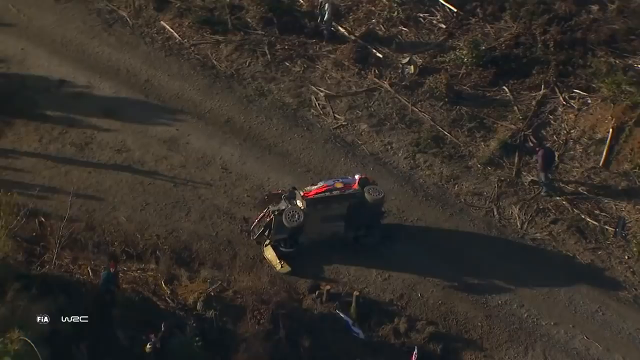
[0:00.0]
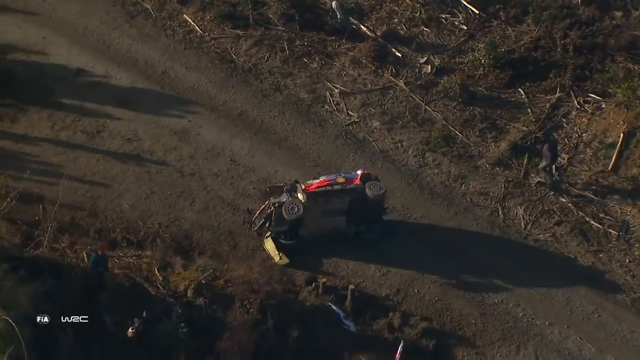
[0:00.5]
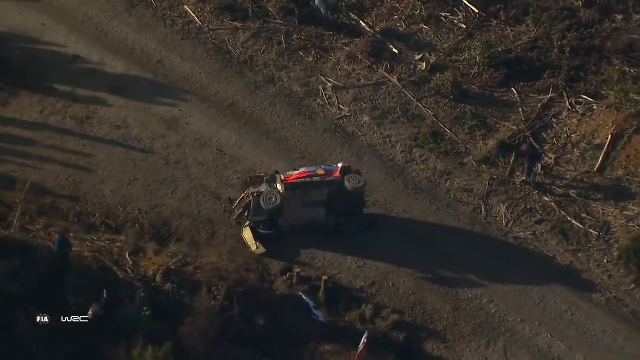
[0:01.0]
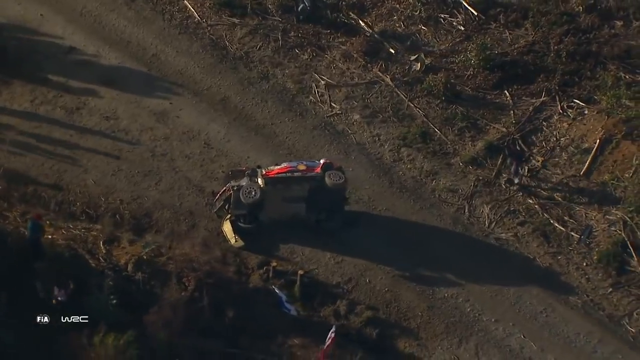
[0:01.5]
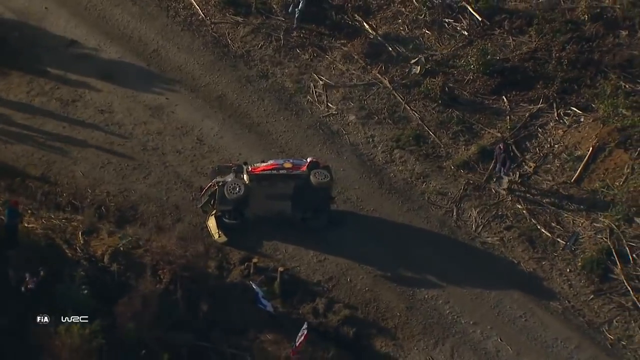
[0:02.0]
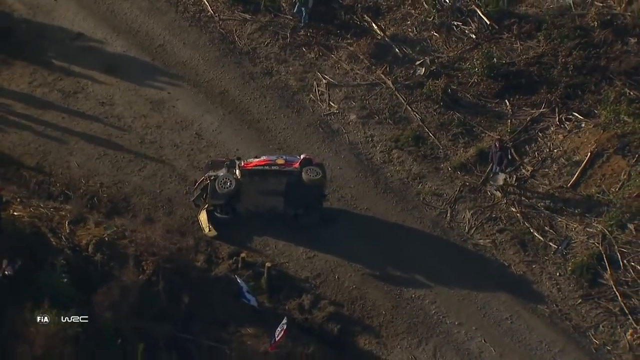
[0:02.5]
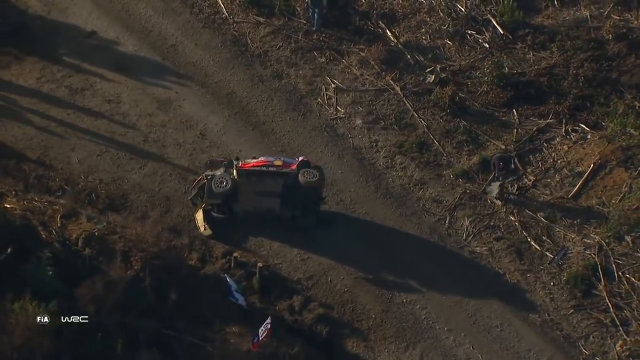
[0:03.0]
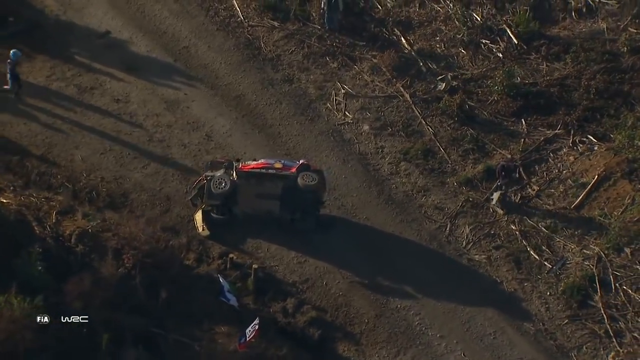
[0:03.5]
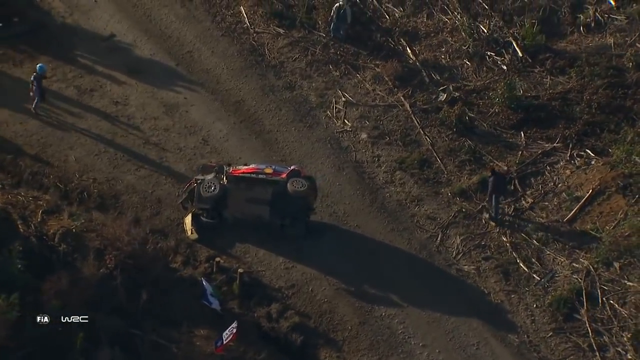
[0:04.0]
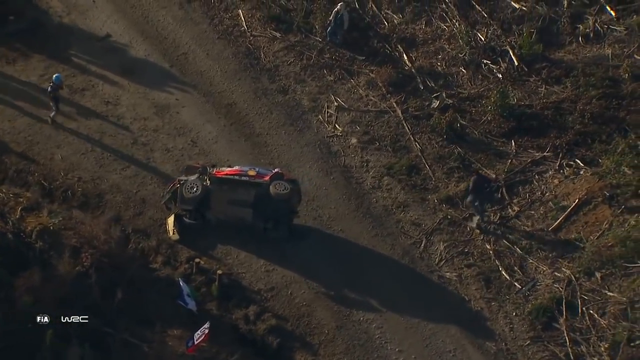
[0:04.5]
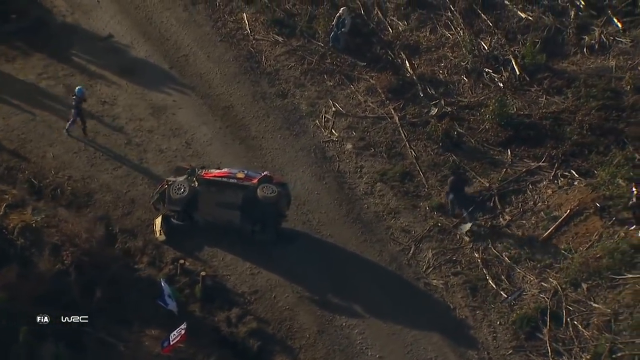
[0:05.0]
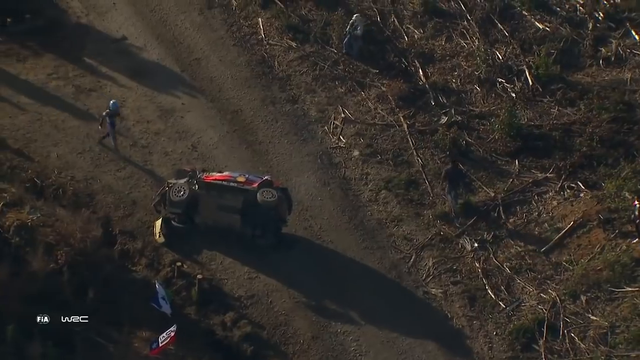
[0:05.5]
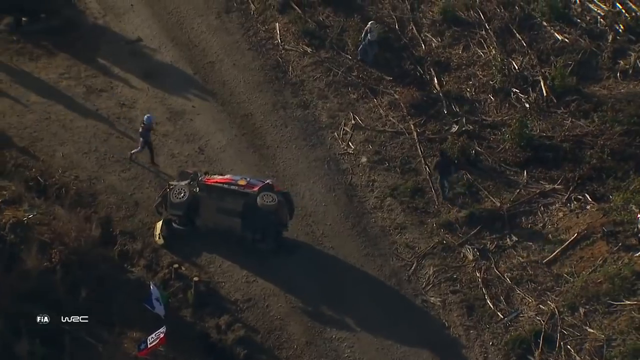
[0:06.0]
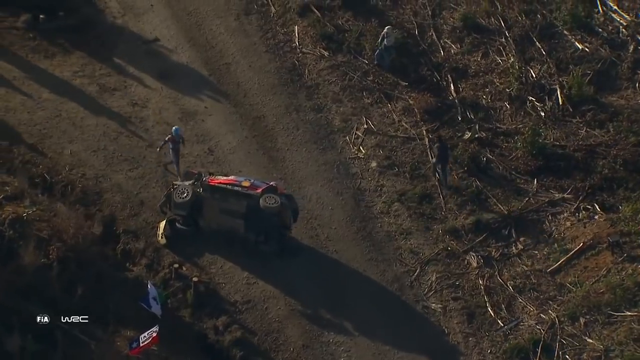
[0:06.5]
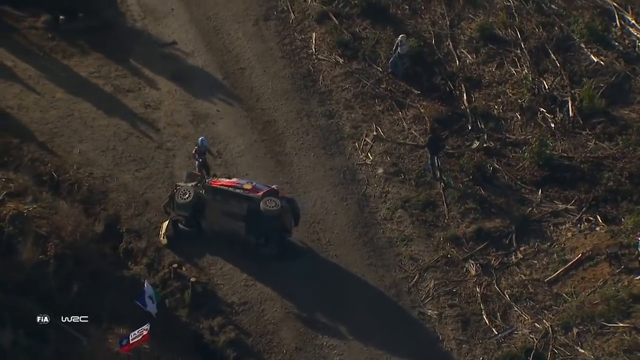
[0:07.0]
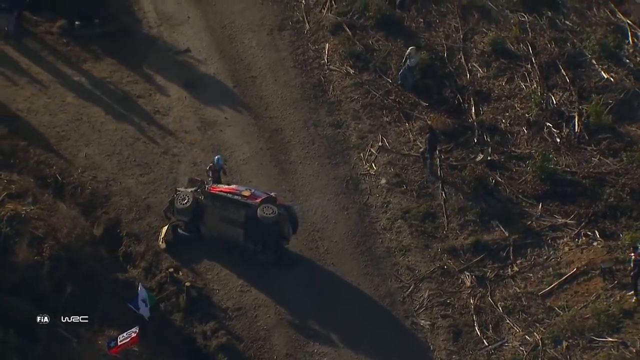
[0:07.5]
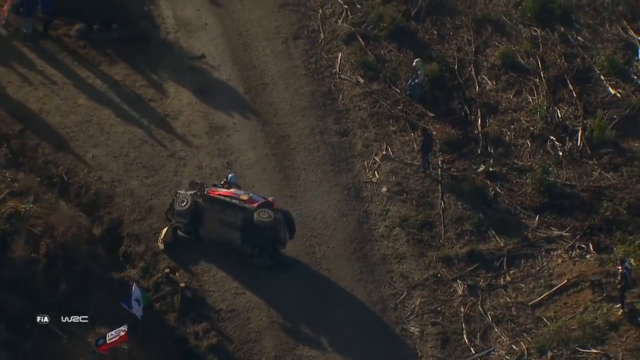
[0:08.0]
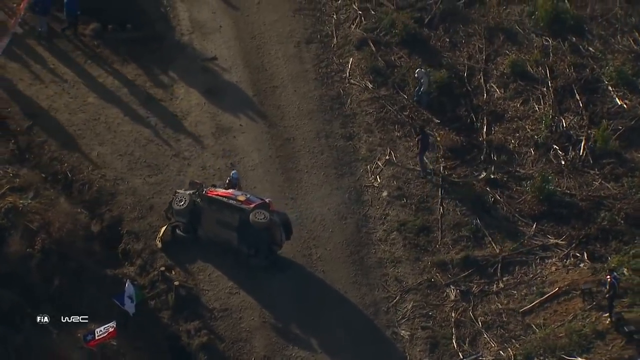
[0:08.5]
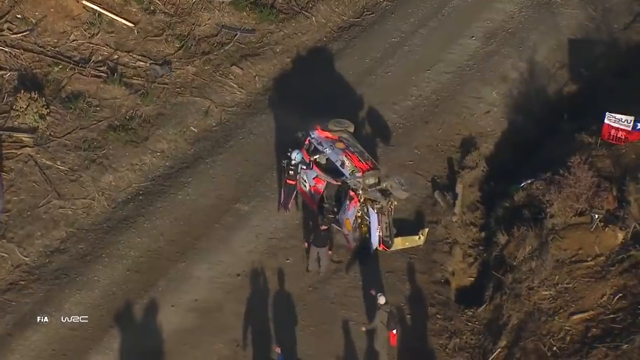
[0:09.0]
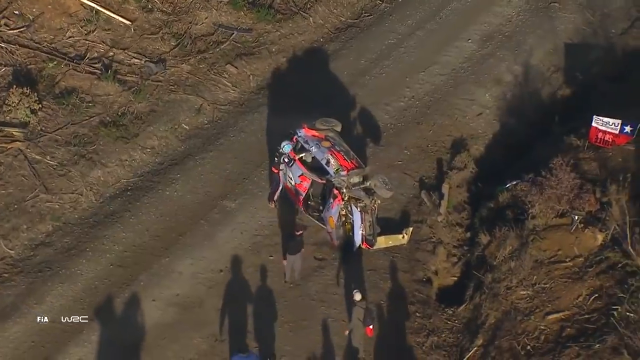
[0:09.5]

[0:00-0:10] Highlights from an outdoor race on a dirt racetrack show a car lying on its side. The race has probably been stopped, since a few people are walking around on the racetrack area; some wear helmets, and some are spectators coming in to make sure the person inside the vehicle is okay. The shot is taken from high above, probably by a drone, so the walking people look very tiny. Shadows fall on the ground from the car and from the people walking. The area around the racetrack is covered in what looks like tree limbs, a little brush, twigs and other growth, and is not grassy.